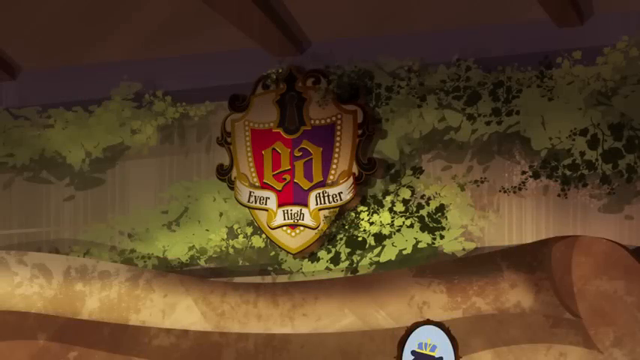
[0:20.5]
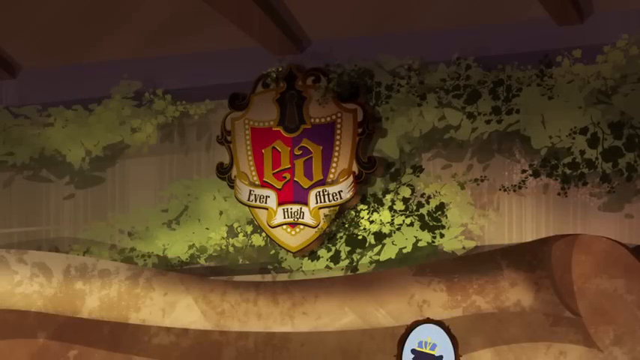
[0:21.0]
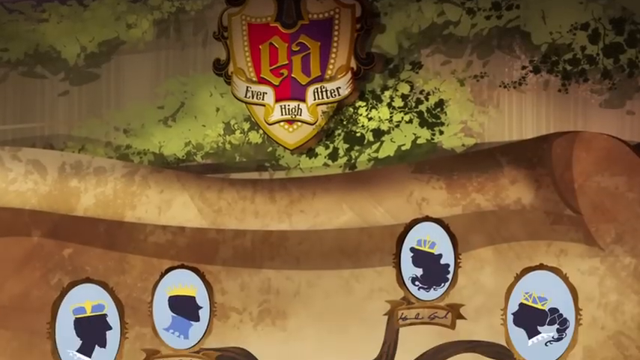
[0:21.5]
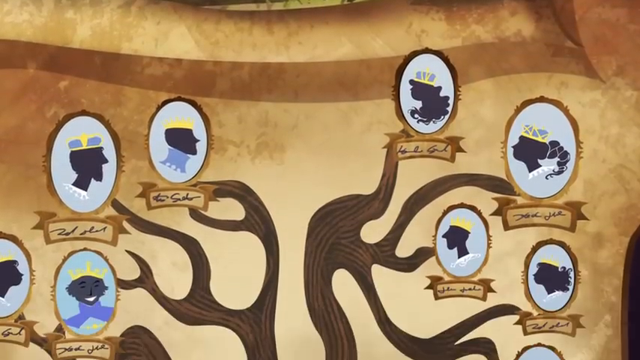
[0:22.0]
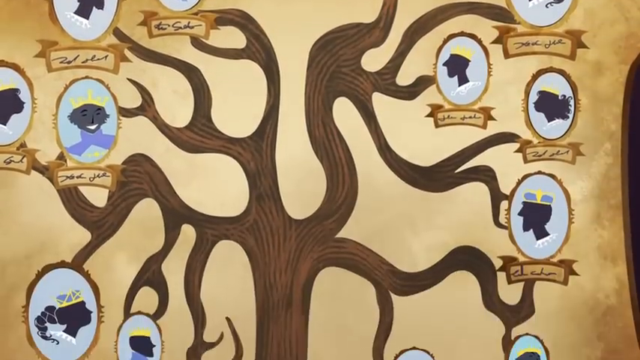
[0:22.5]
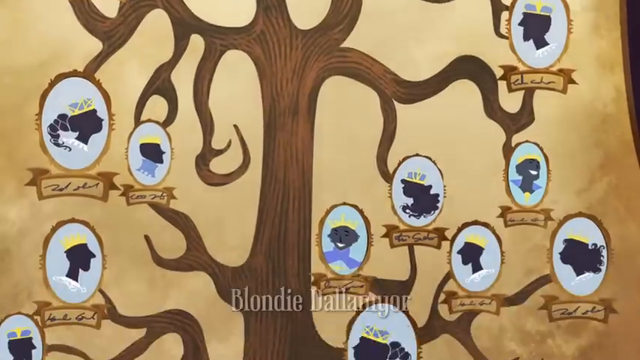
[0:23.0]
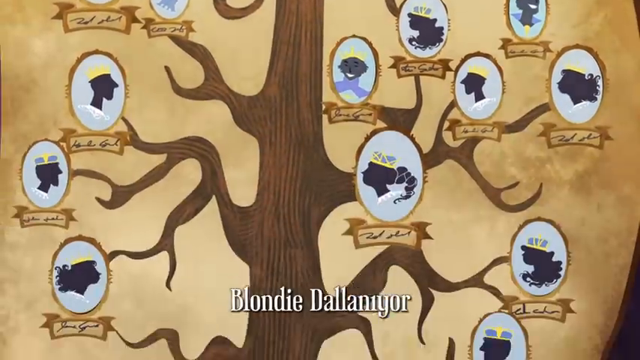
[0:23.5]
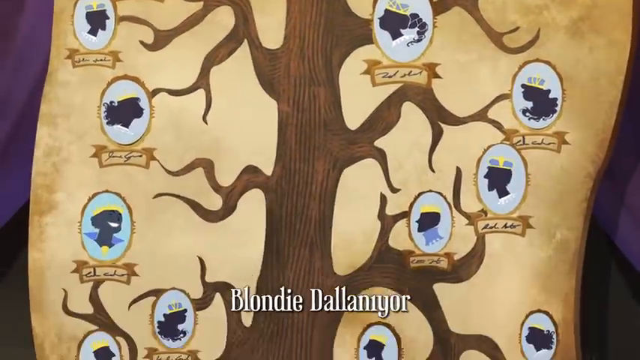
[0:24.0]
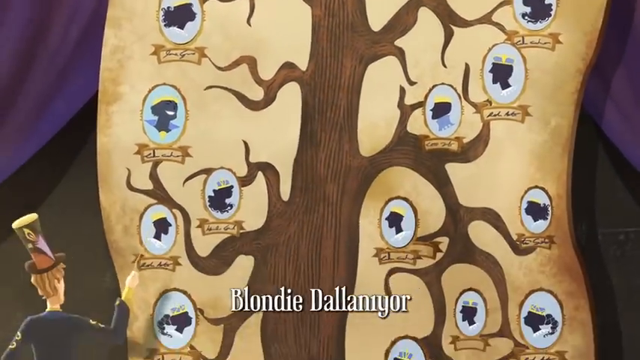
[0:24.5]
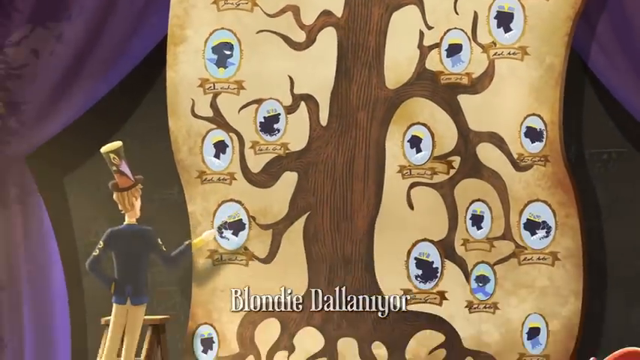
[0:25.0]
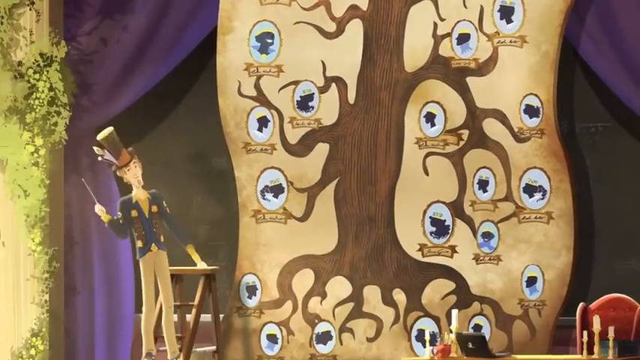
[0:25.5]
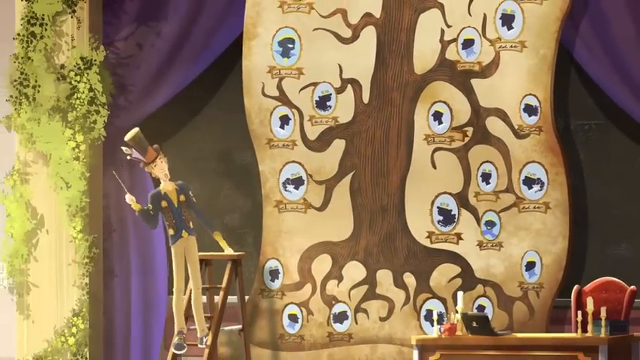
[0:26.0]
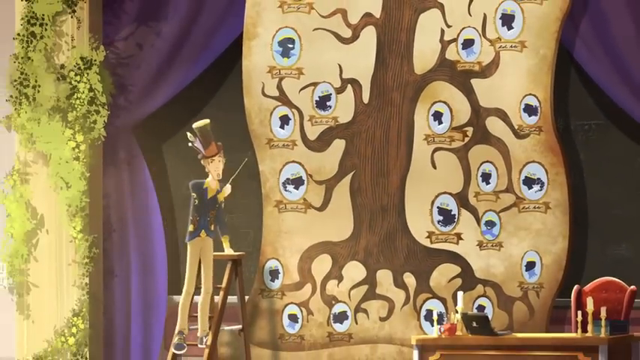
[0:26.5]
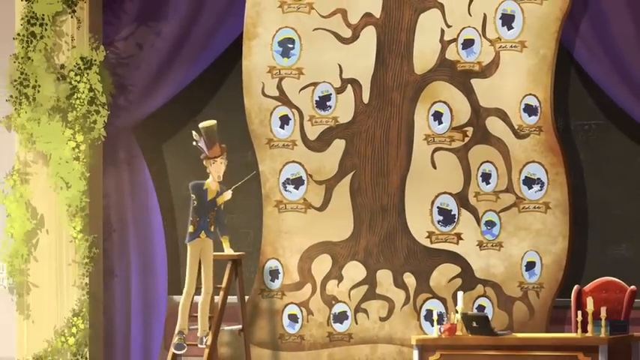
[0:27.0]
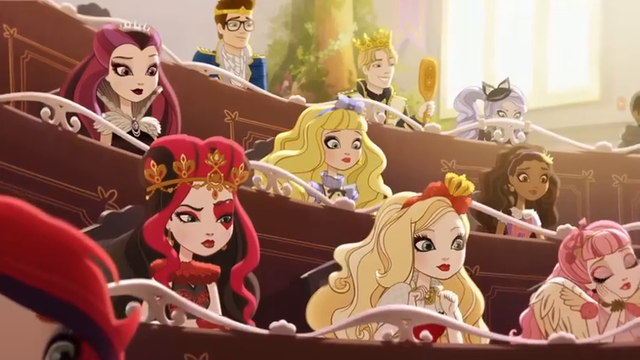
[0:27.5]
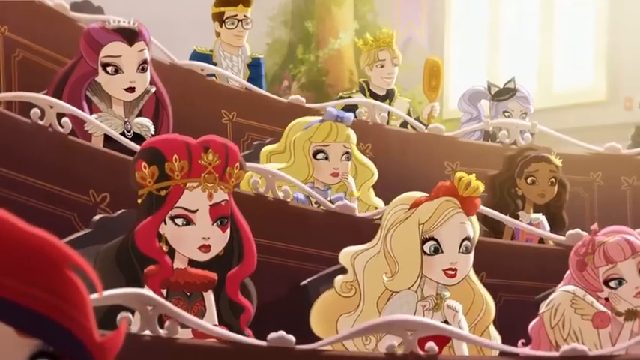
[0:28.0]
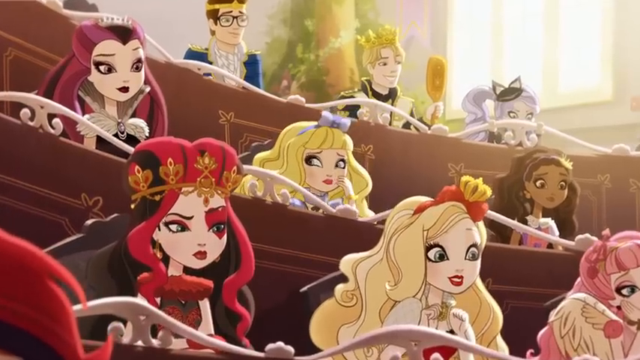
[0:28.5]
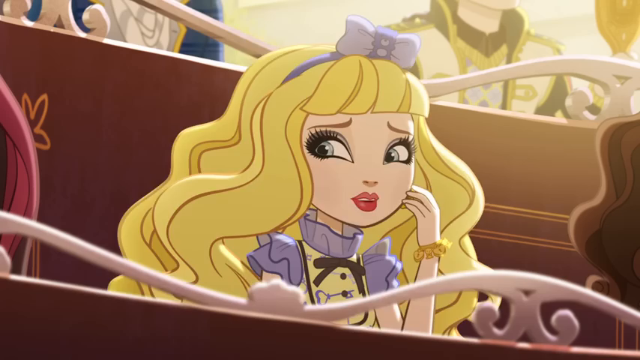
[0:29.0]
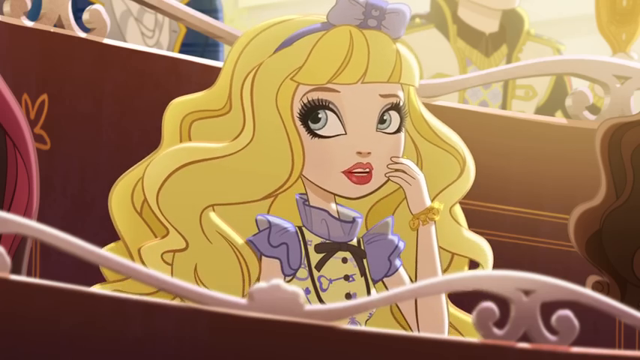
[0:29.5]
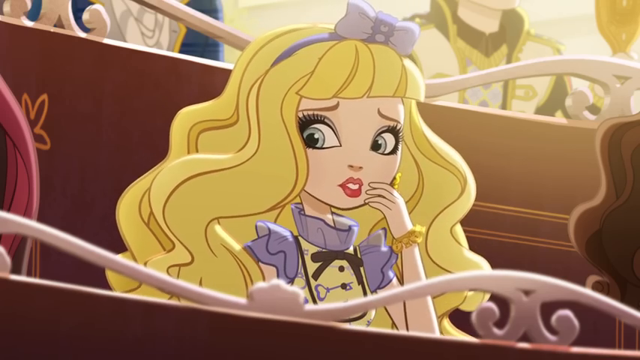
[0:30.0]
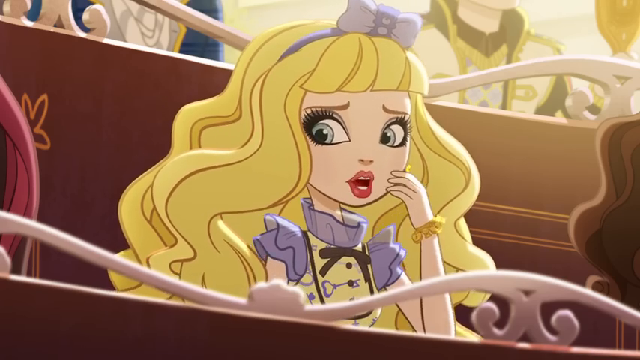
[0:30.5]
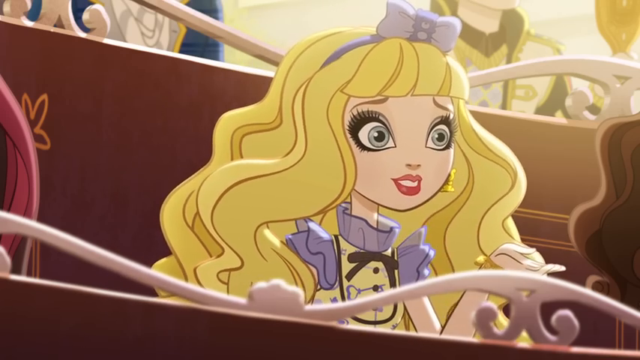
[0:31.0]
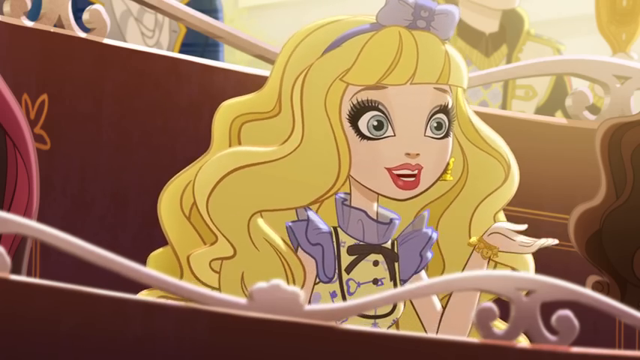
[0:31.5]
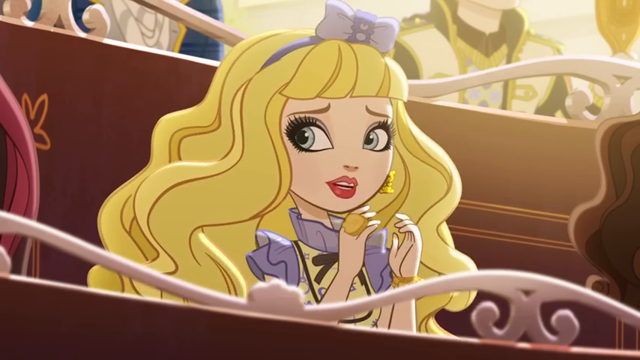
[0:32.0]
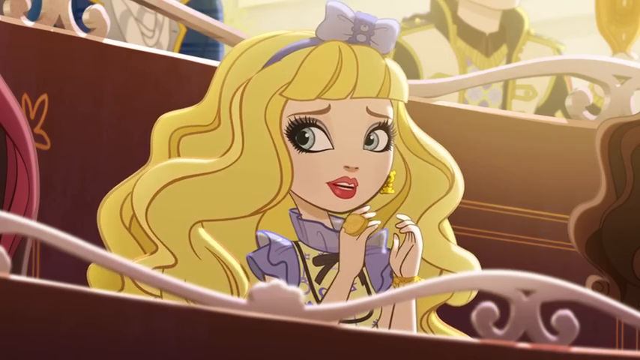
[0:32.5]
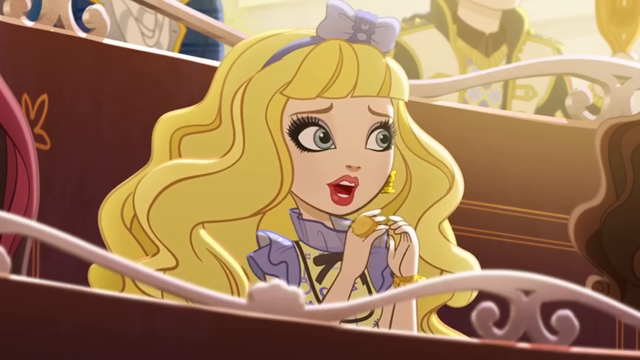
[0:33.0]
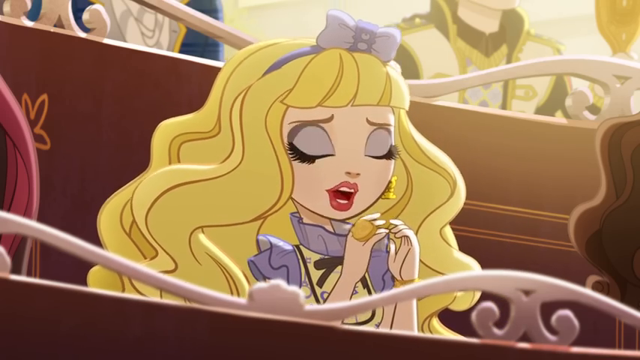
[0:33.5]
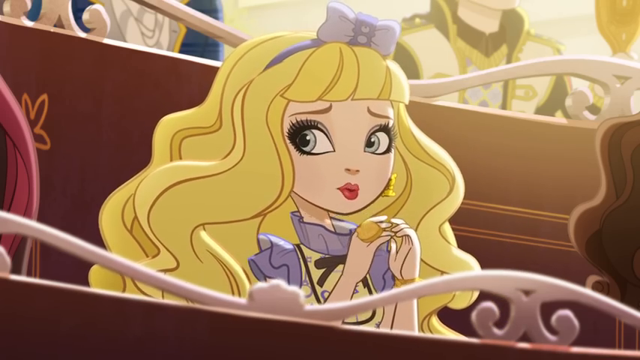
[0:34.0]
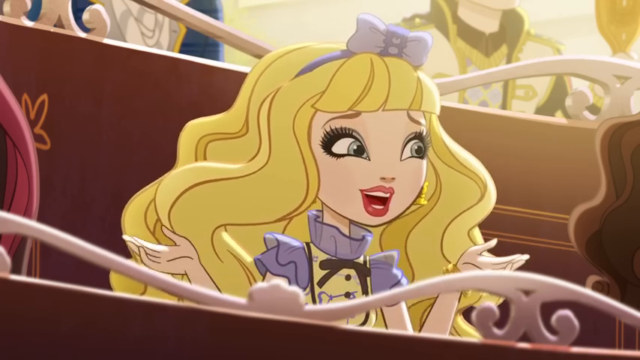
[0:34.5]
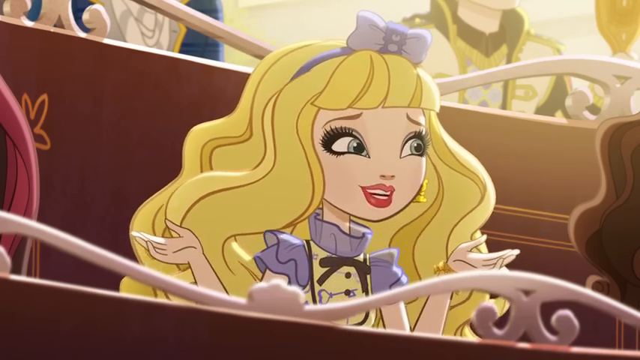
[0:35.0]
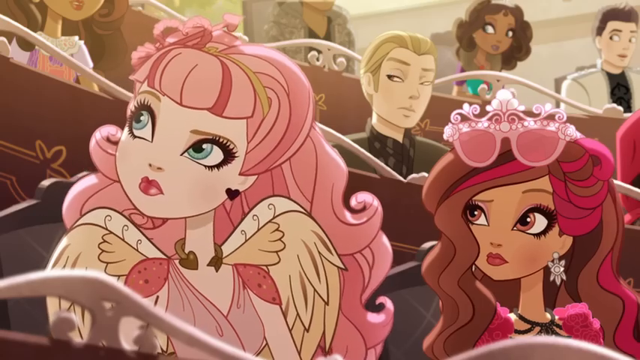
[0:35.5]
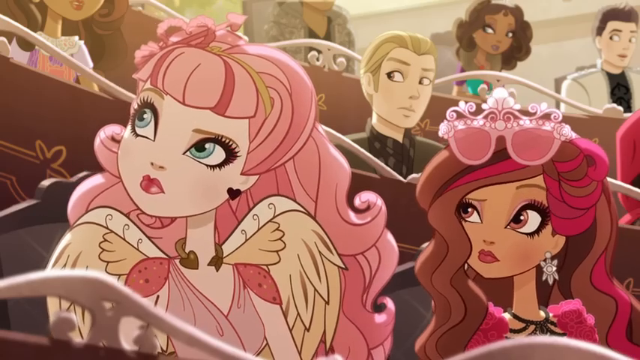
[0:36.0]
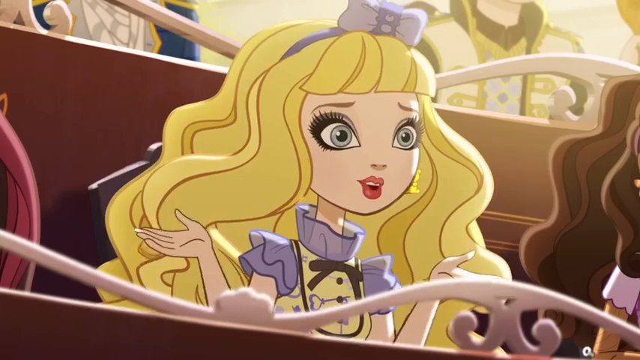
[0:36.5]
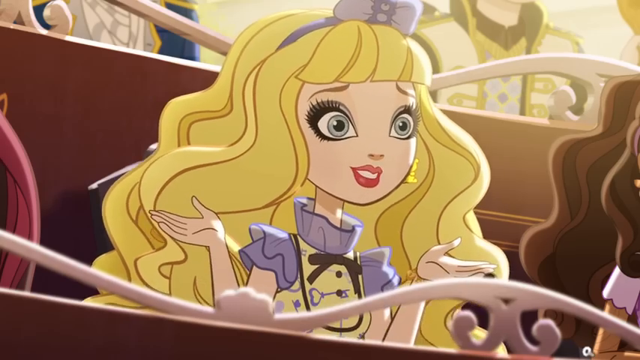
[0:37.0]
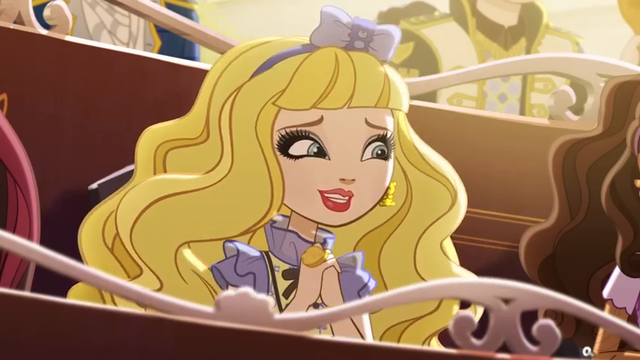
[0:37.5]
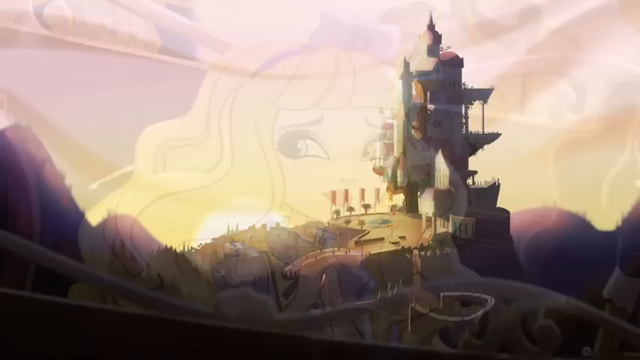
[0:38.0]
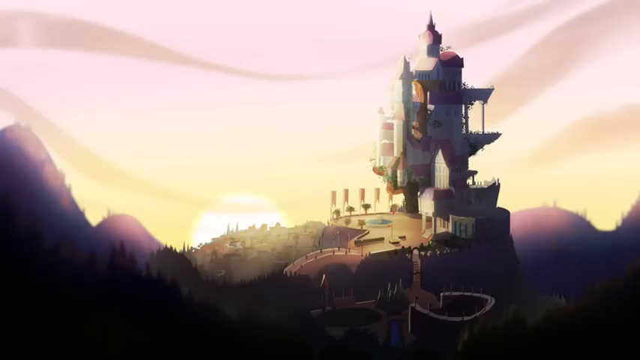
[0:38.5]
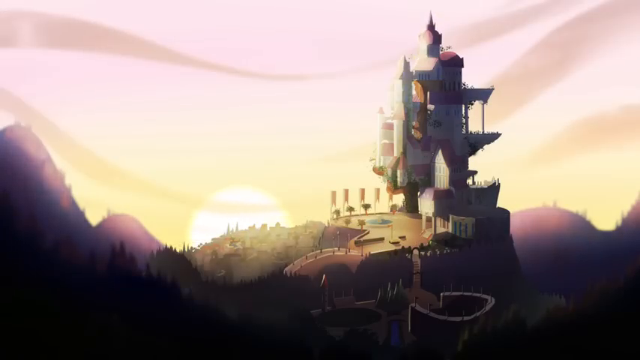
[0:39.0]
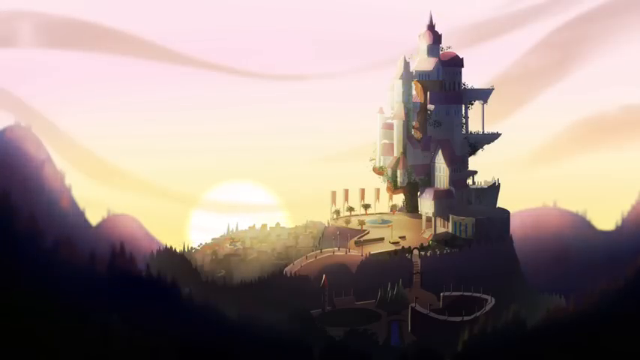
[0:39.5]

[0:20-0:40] Fading in from black, text reads "Ever After High", which can also be read as "ever high up" depending on how it is viewed, along with an EA on a shield design. The camera pans down across a number of portraits of what seem to be people who took part in the school or helped build it. "Blondie Deligneur" appears at the bottom as a credit. Next, what might be a teacher stands on a stepping ladder and points at the tree, so this may be a history class. A large variety of students follows, about nine of them: two males and seven females. The view seems to center on the one in the middle, who seems worried and seems to be asking questions. It fades to a picture of the entire castle, then to a scene of a corner where someone peeks around it.